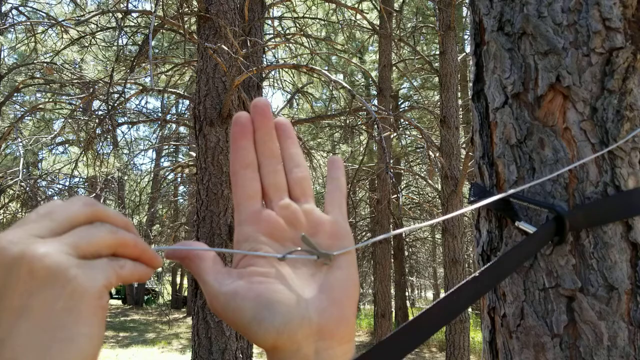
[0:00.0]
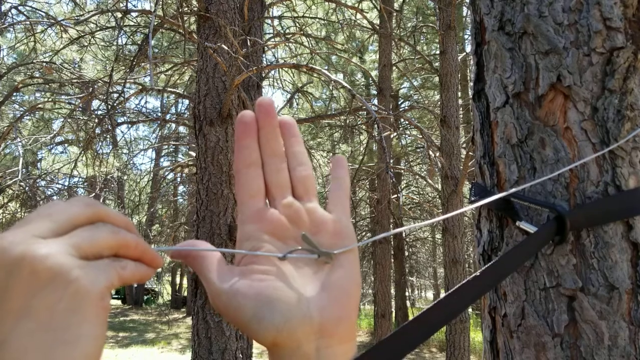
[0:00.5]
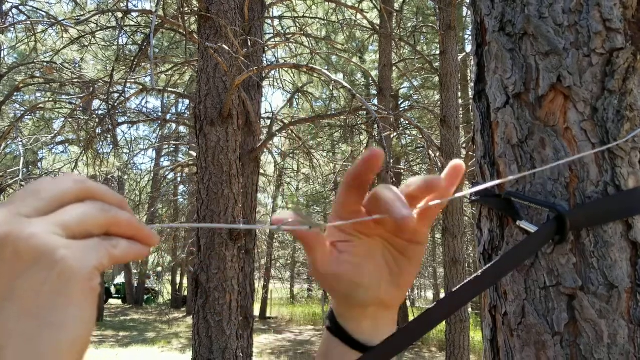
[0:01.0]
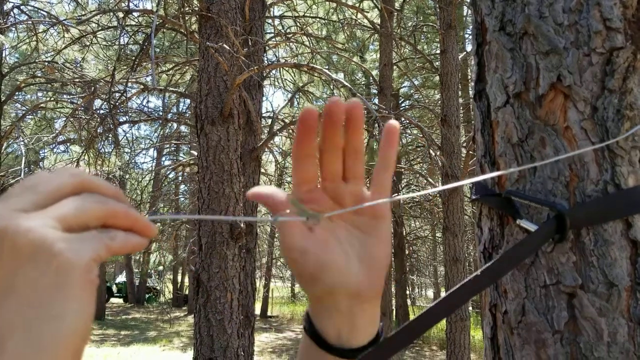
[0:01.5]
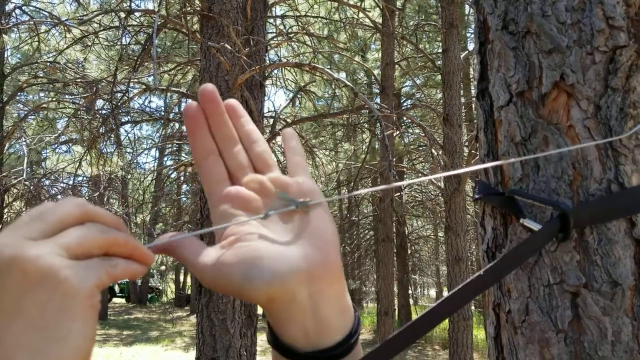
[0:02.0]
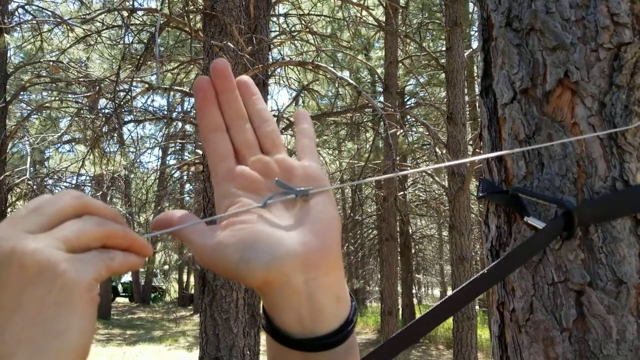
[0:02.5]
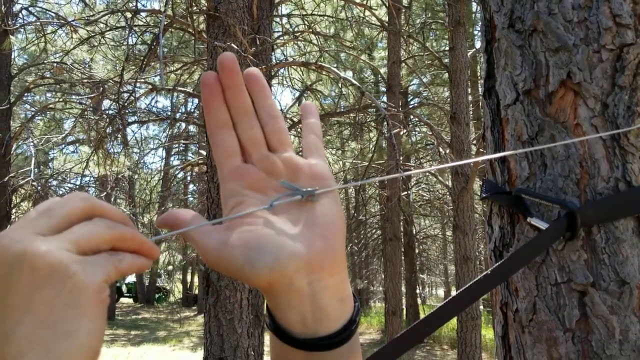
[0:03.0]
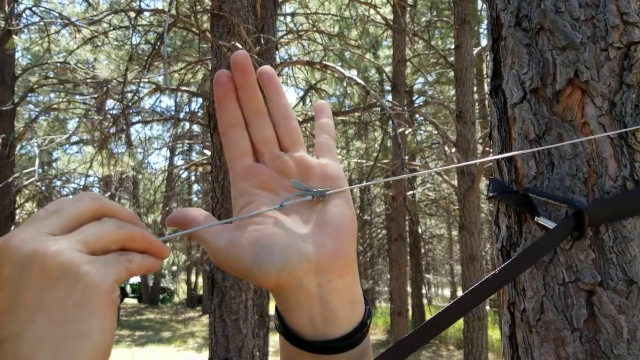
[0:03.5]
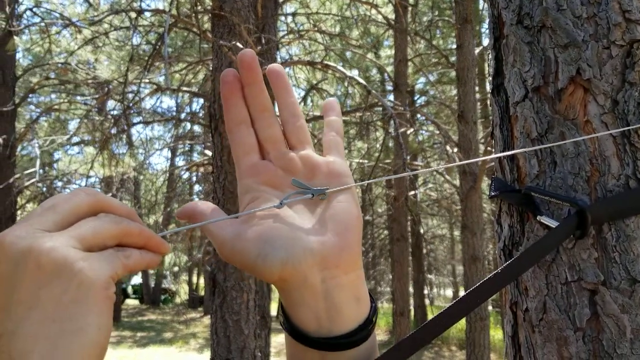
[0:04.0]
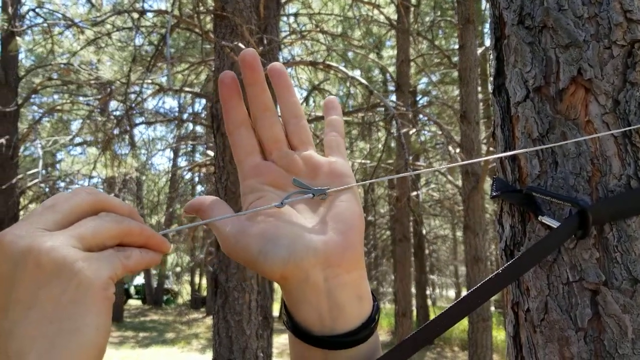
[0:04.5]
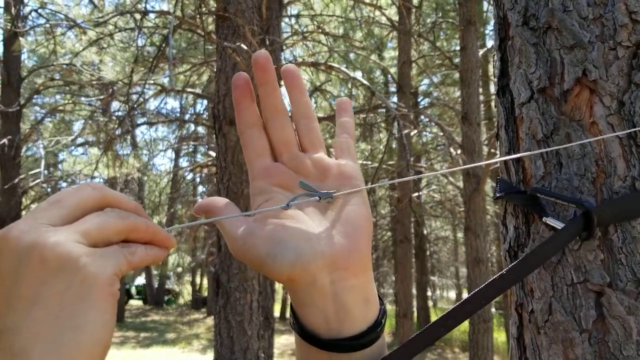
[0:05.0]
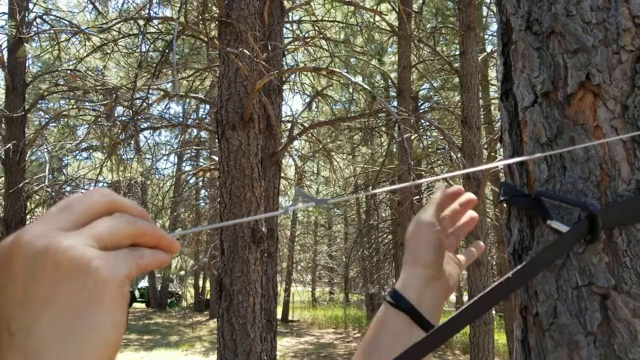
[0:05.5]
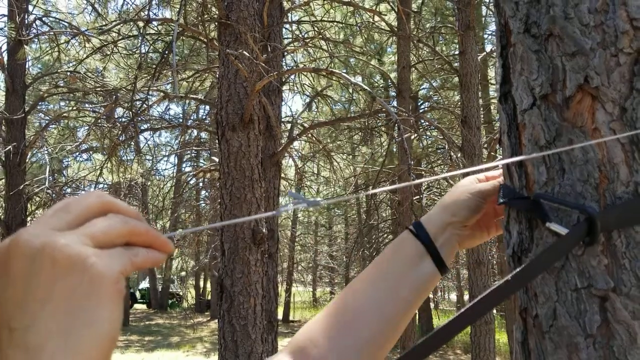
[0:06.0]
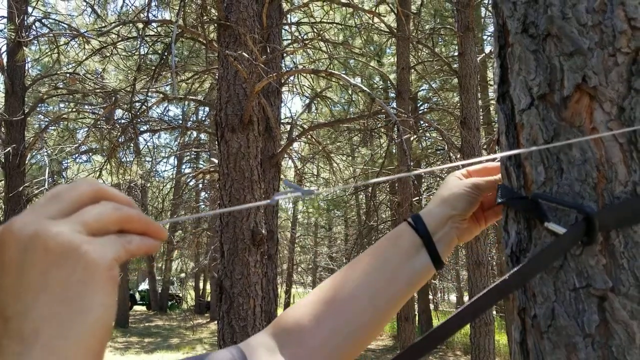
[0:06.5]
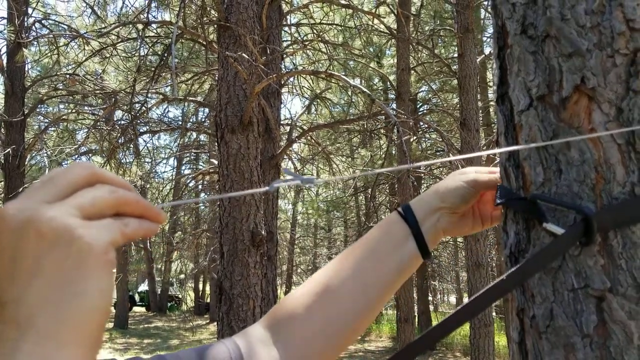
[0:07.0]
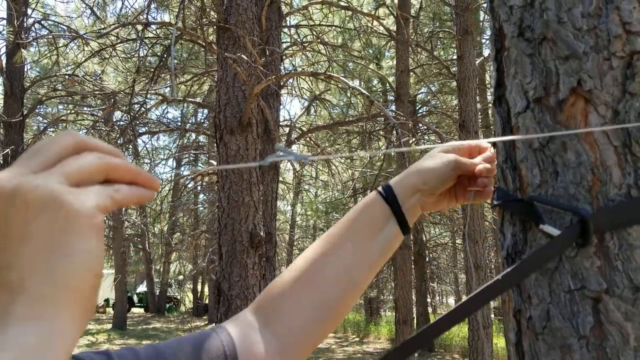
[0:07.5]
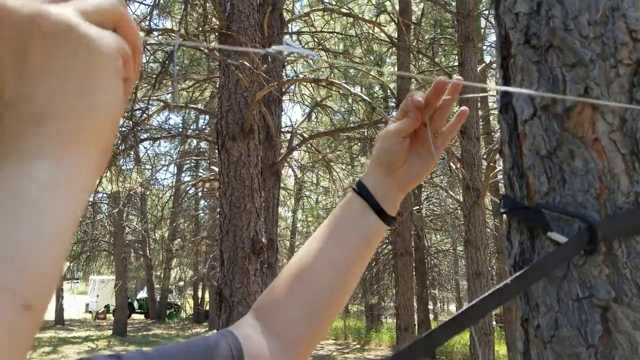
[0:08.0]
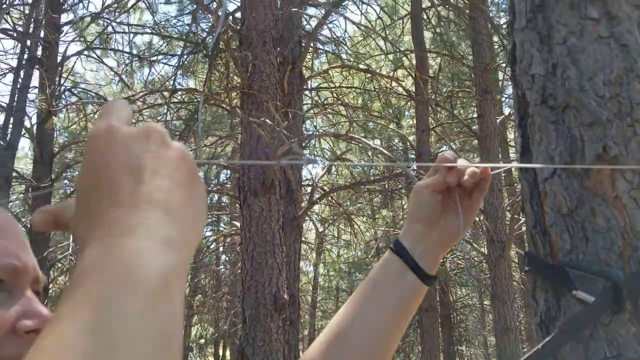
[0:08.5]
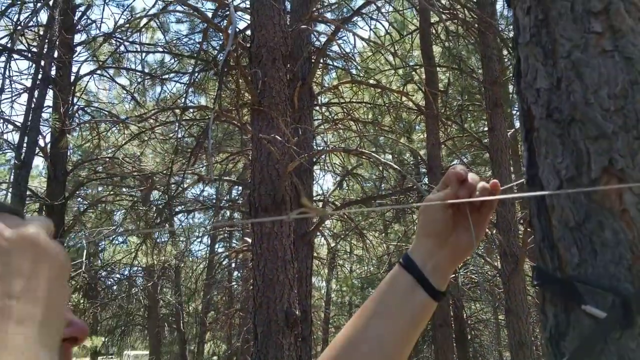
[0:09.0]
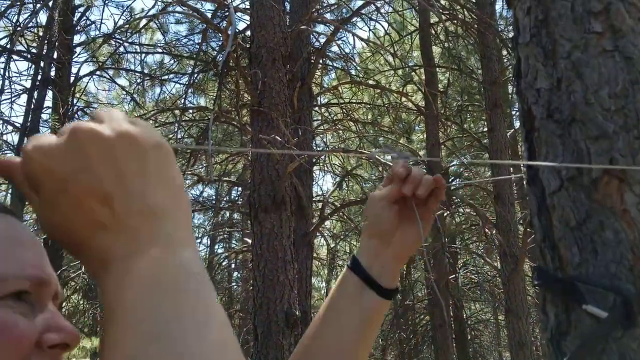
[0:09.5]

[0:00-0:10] Someone appears to be in the woods, holding on to a bit of what looks almost like string that appears to be tied to a tree. Their hands are visible as they grip it, and it is around the trunk of the tree. On a closer look, it may actually be some sort of saw or sawing device. The area looks very wooded, with rows of trees behind them, and it appears to be a bright, sunny day, with some blue sky poking through the treetops.